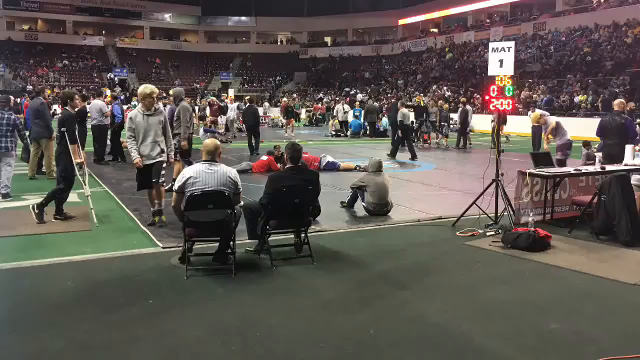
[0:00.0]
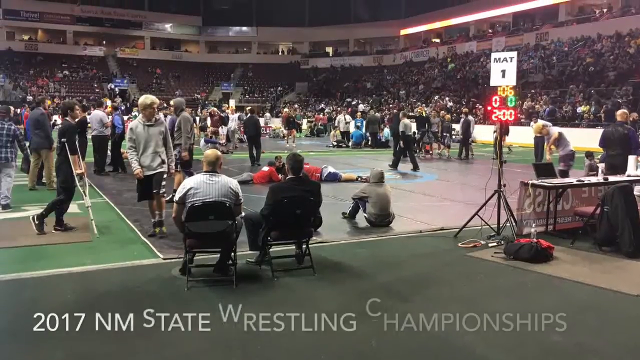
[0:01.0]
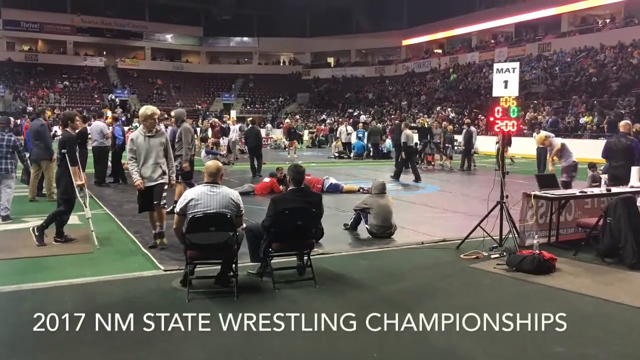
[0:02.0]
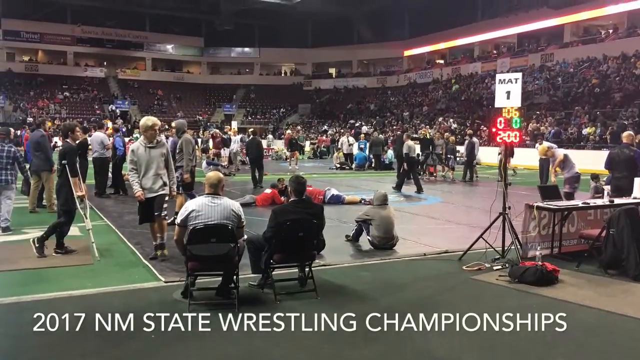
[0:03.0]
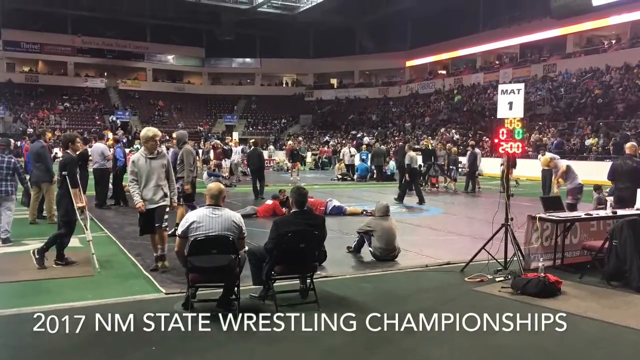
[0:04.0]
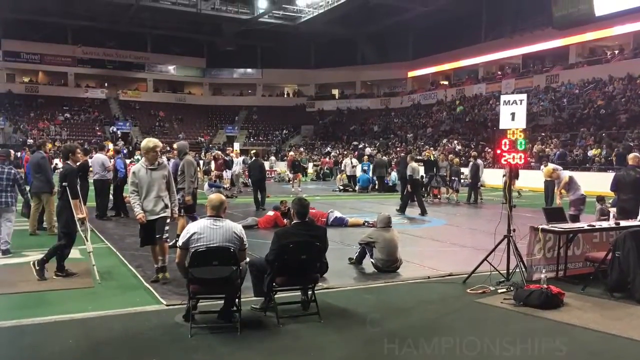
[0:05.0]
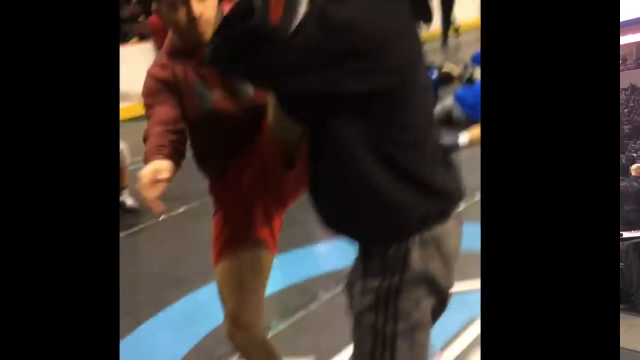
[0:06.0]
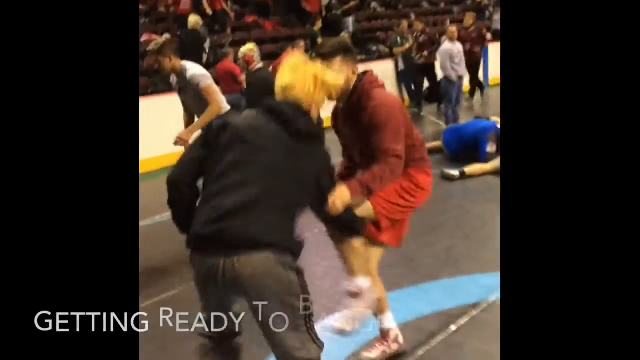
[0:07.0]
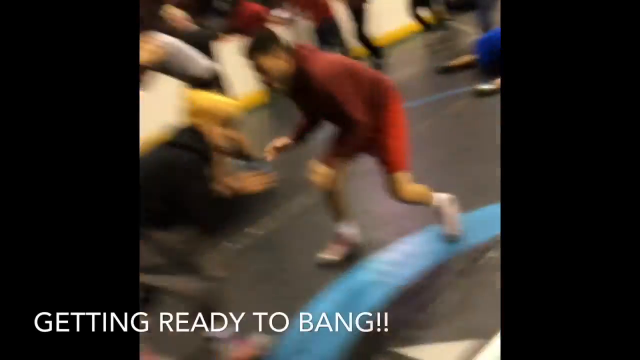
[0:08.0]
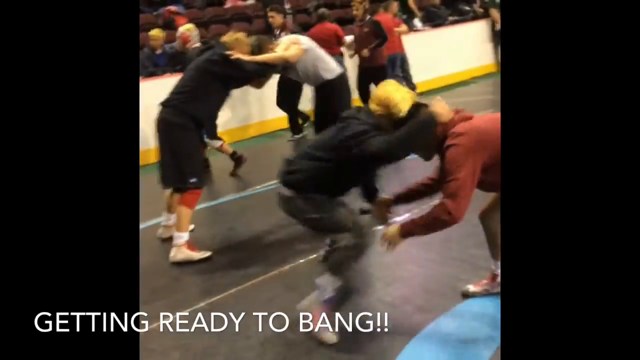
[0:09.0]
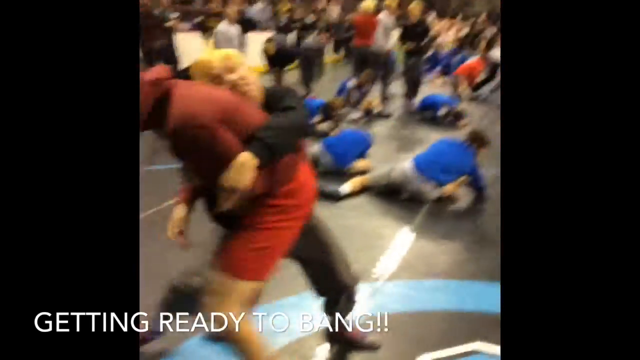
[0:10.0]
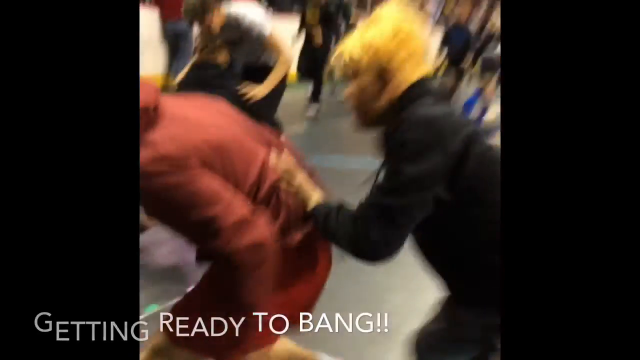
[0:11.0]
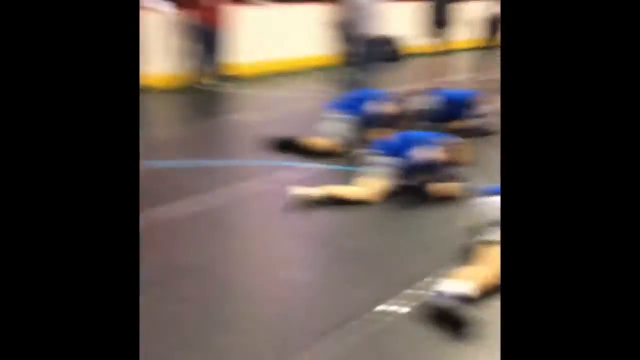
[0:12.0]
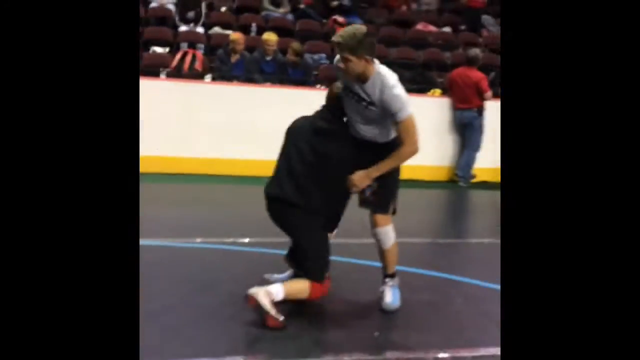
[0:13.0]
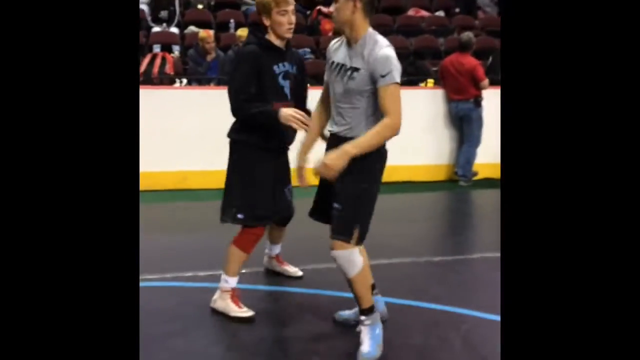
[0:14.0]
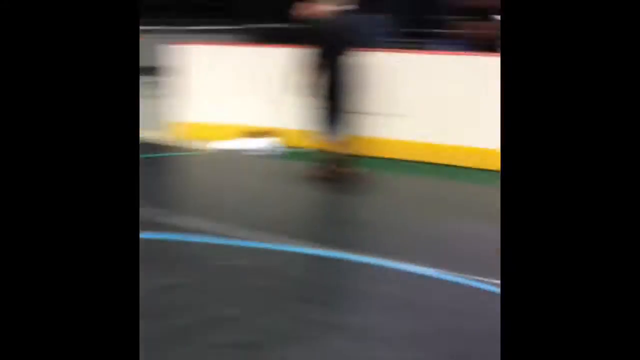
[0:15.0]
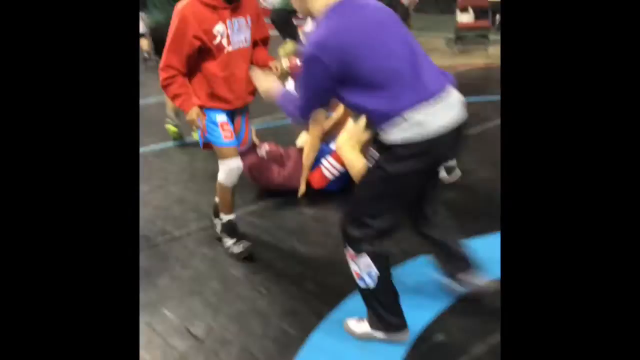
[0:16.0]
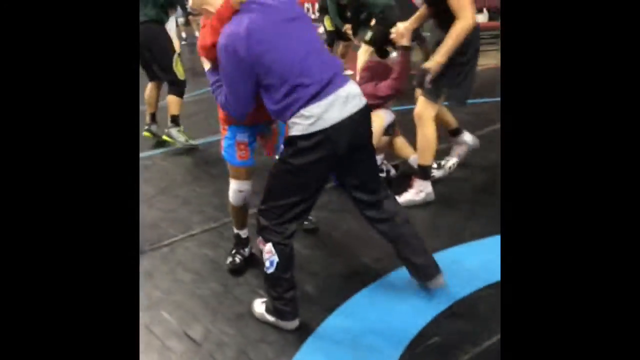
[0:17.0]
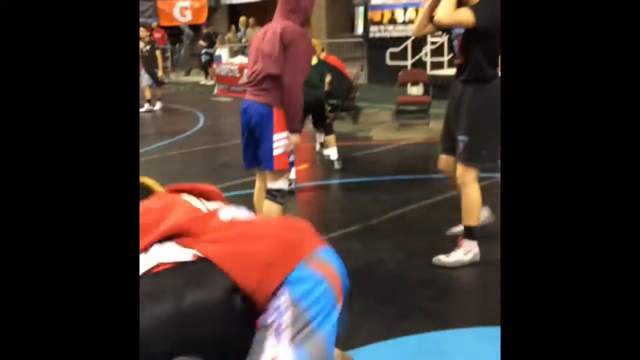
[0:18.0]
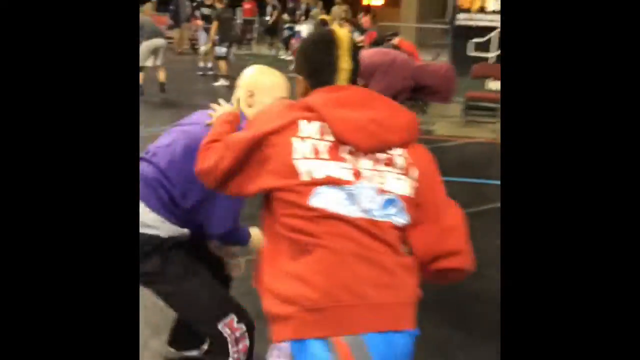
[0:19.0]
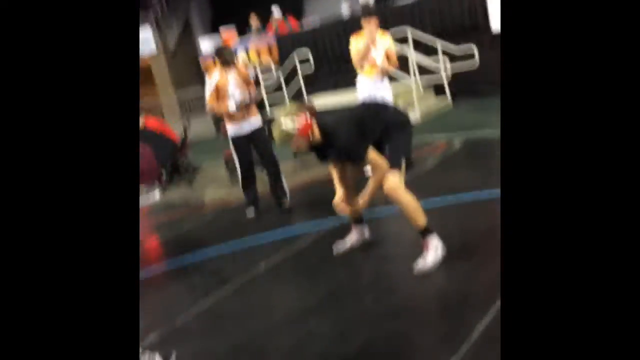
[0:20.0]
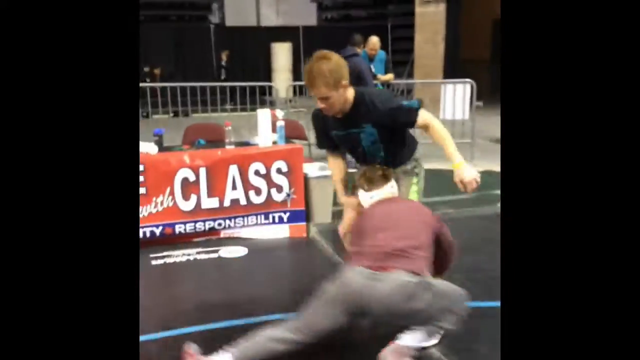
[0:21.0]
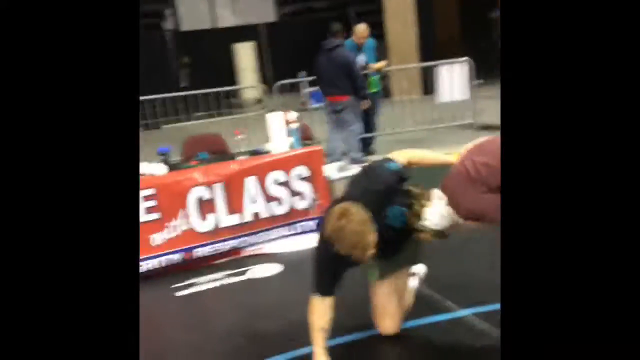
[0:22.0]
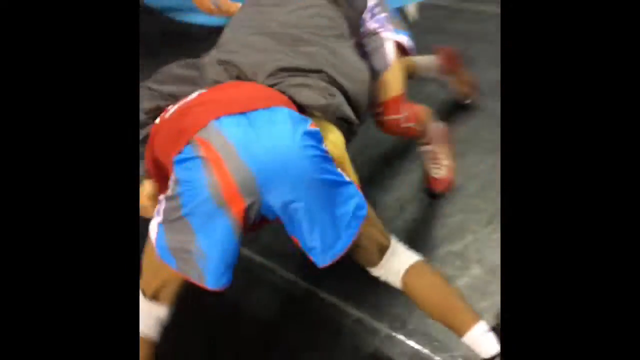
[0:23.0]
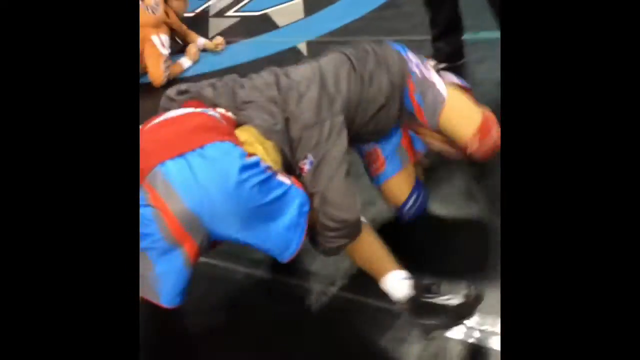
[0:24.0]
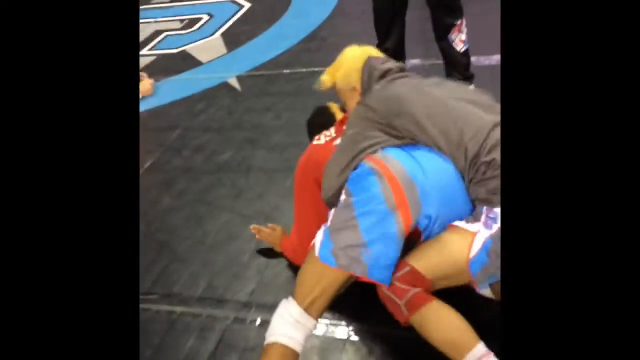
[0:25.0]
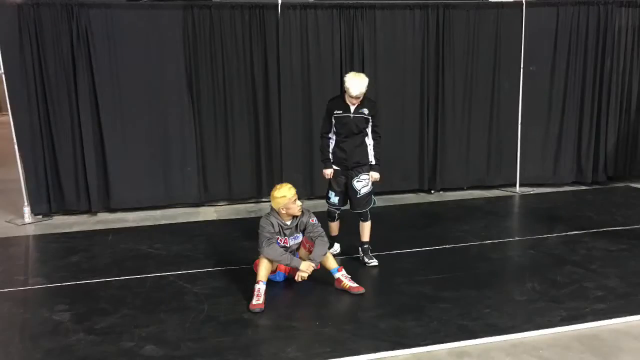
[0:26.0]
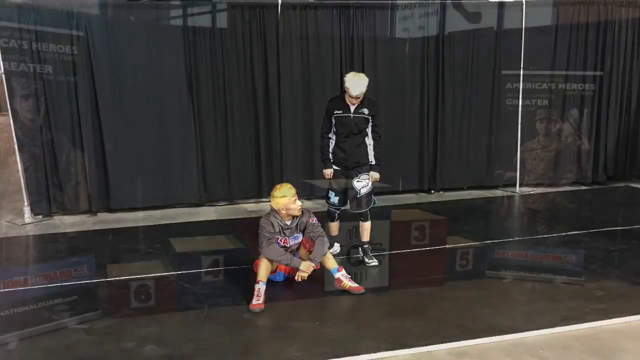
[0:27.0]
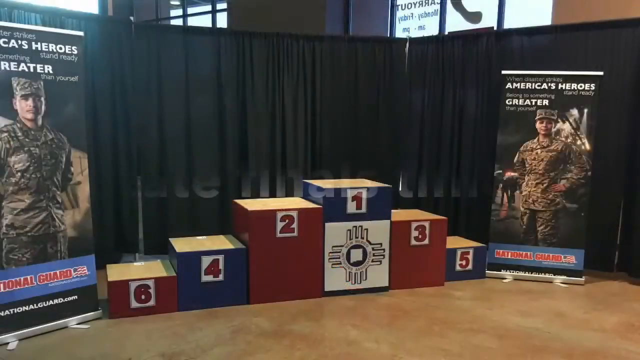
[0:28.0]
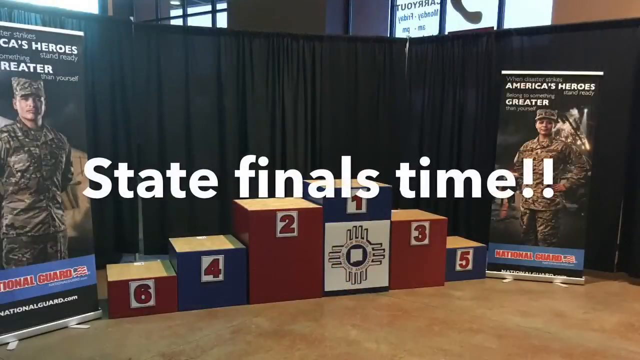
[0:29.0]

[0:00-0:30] A wrestling competition is being held in a very large gymnasium. A large group of kids, possibly teams, are on the mats, apparently wrestlers warming up before the competition. At least 100 people are on the mat warming up, probably closer to 200. At the beginning, words at the bottom of the screen read "2017 NM State Wrestling Championships," with NM most likely standing for New Mexico. Toward the end, text indicates it is the state finals, and a podium with places one through six is shown.